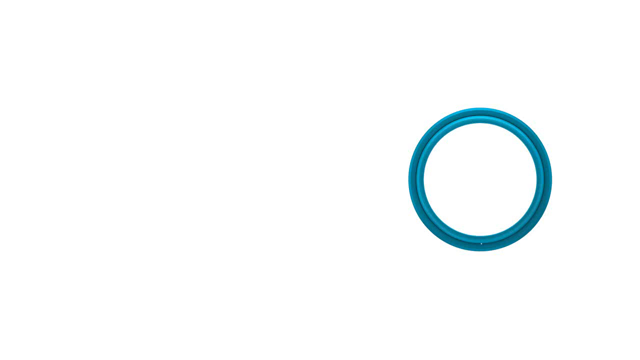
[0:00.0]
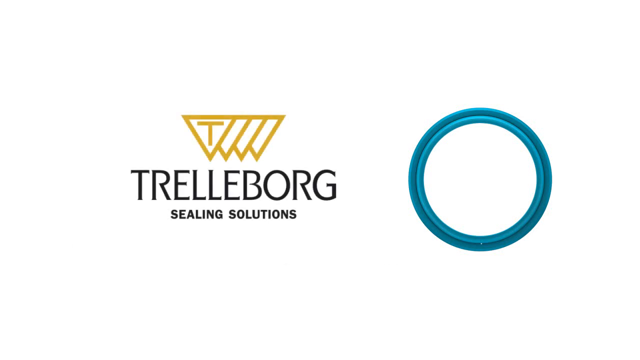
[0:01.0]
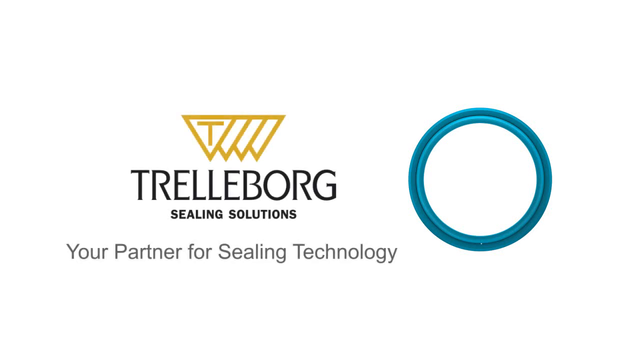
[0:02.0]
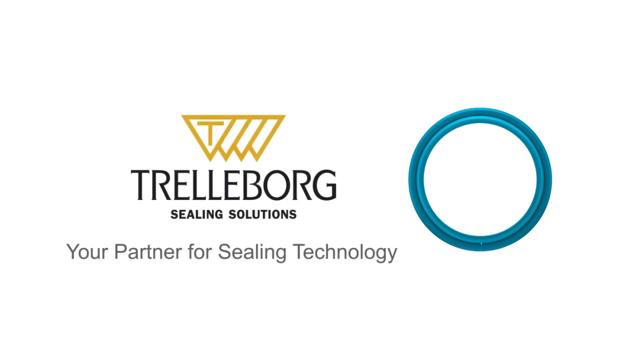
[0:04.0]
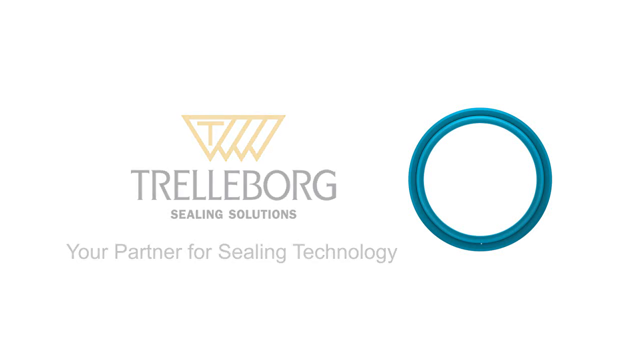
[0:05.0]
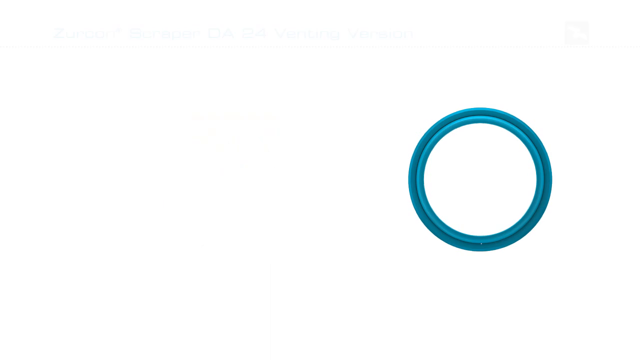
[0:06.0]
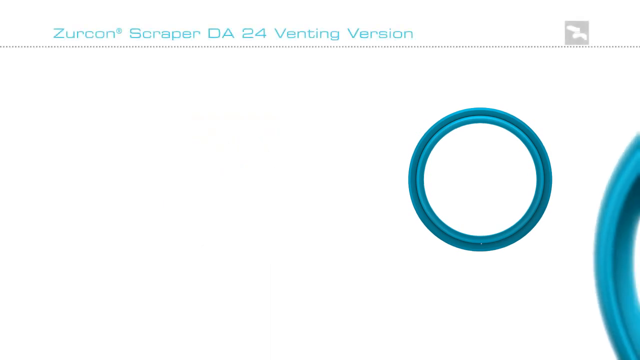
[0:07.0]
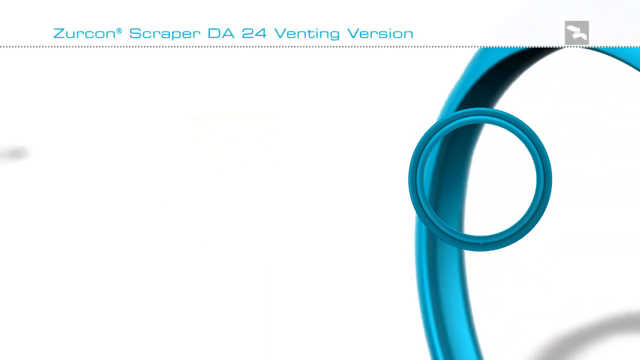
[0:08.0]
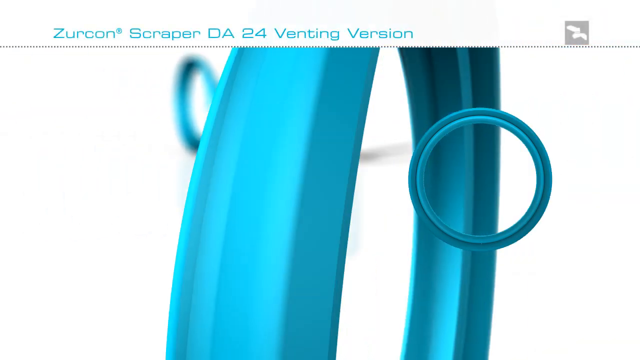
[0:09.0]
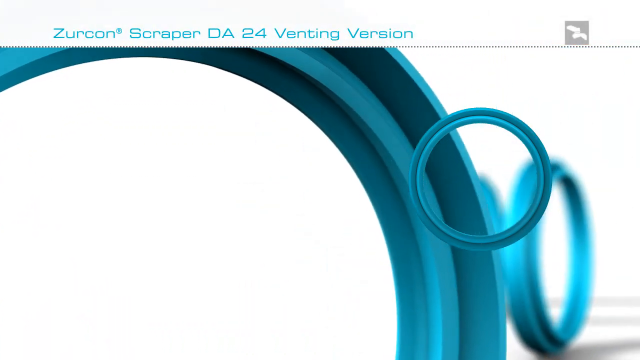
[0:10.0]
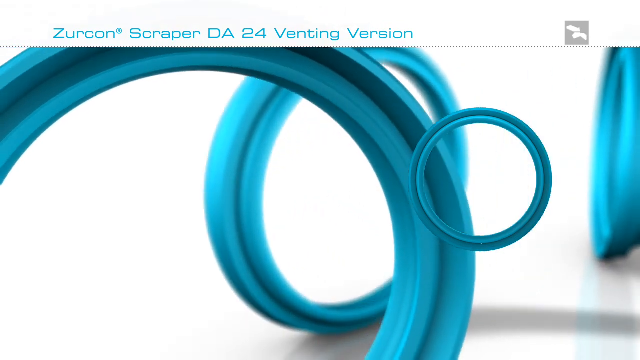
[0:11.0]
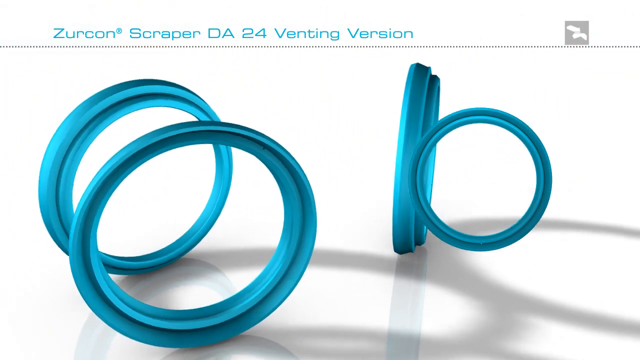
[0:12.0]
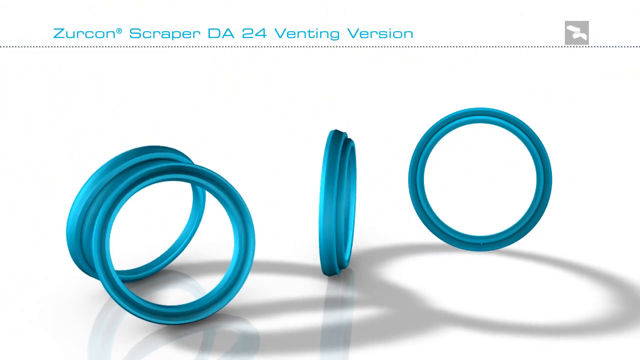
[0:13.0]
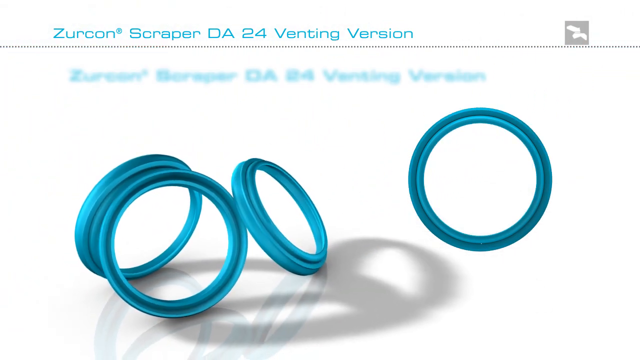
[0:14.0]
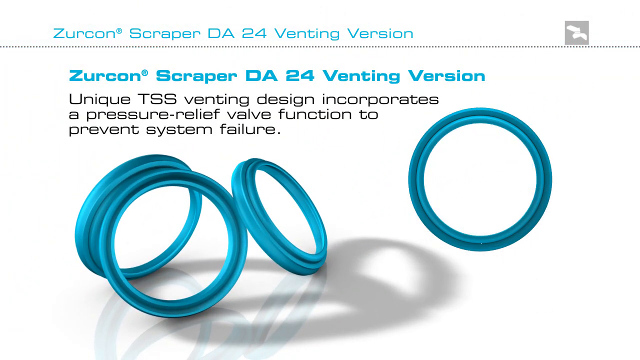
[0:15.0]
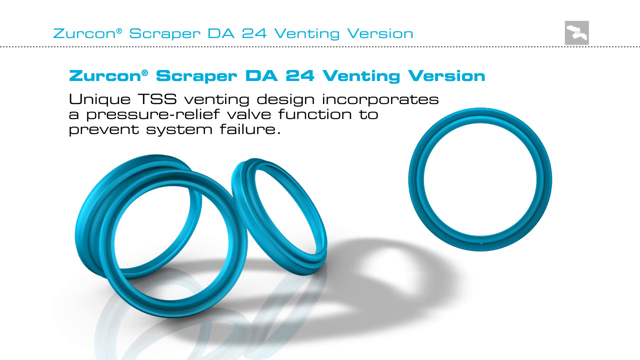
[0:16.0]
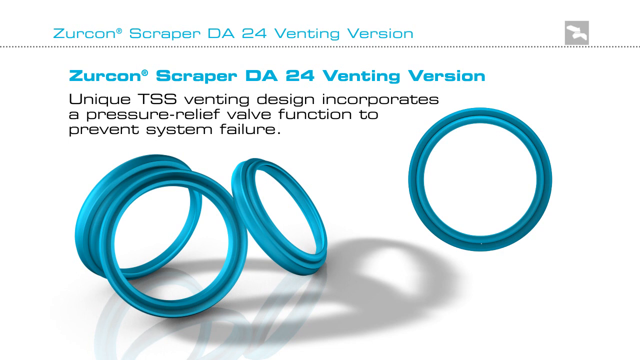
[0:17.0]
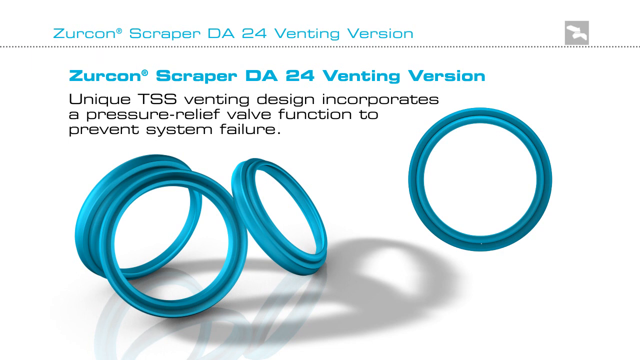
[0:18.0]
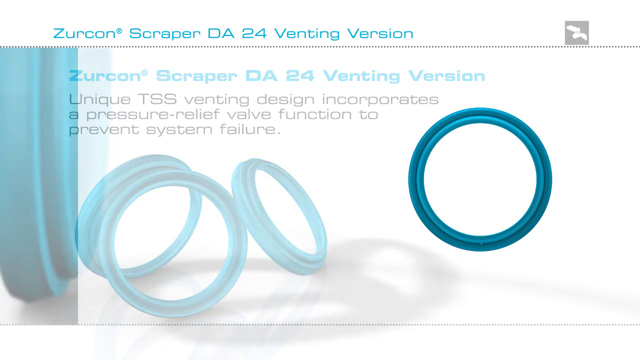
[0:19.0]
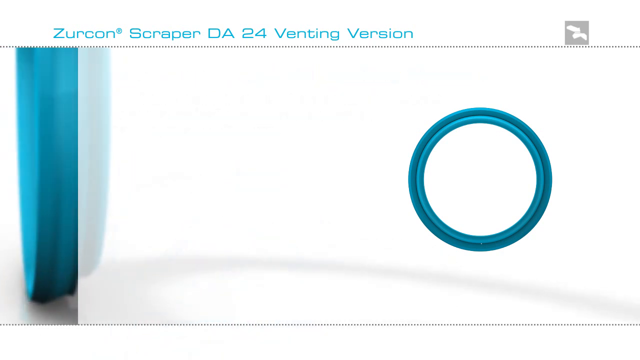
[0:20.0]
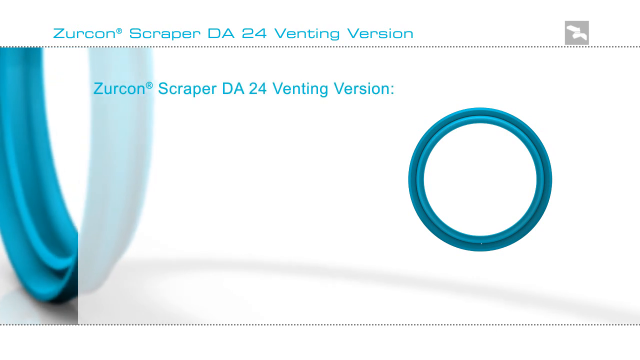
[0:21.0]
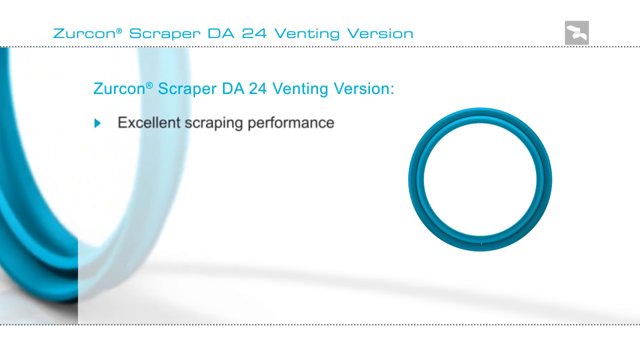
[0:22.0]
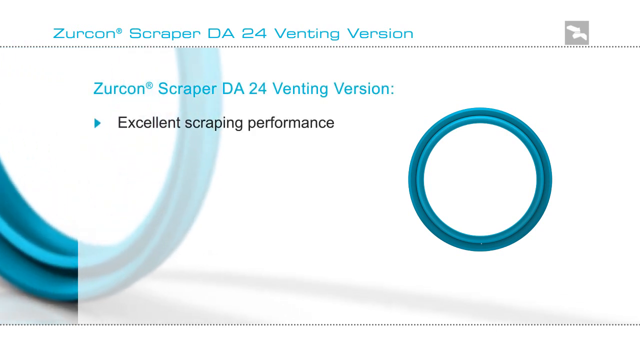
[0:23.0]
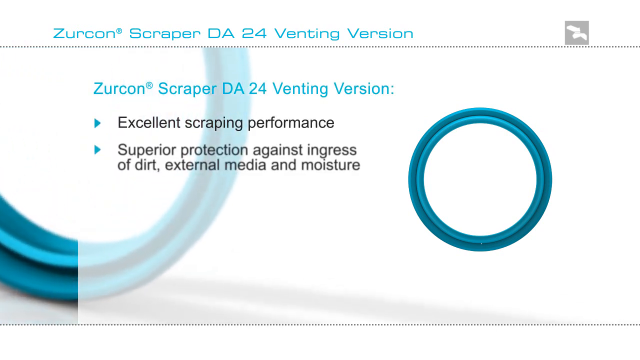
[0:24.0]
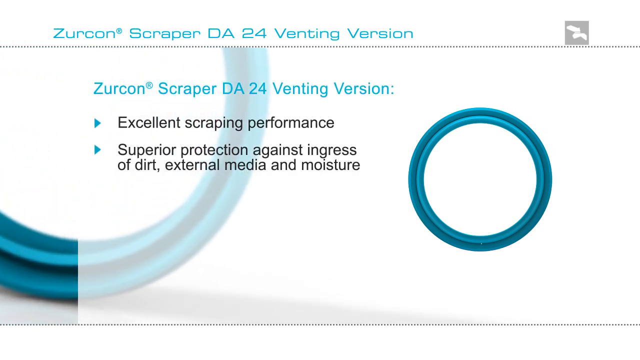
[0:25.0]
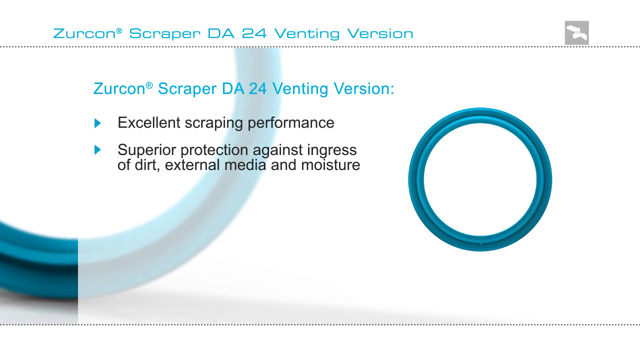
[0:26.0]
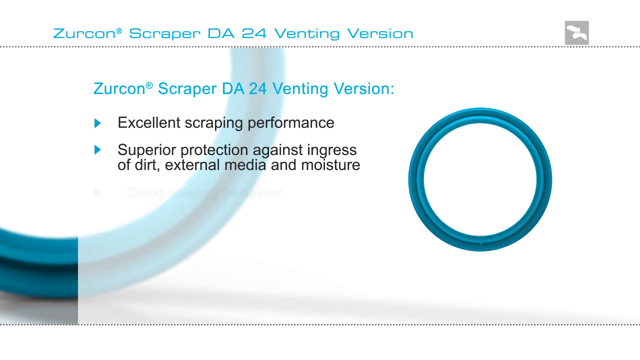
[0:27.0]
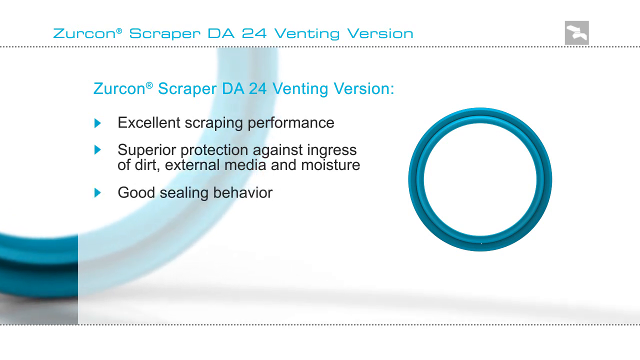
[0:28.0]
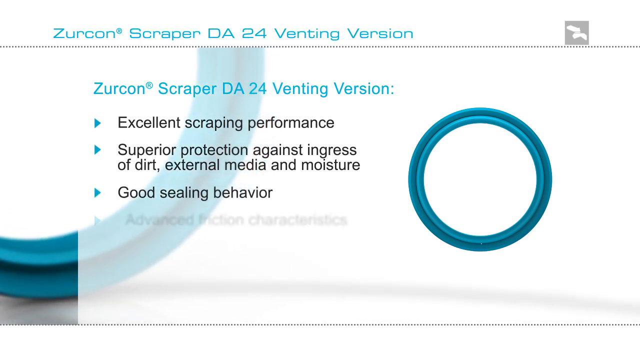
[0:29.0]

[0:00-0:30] A logo appears with four triangles that all seem to point down; the left triangle has a gold T in it. Underneath, black text reads "Trail Love Board Sealing Solutions", and text at the bottom reads "your partner for sealing technology". On the right there seems to be a turquoise circle, and the background is white. Everything then disappears except the blue circle, and light blue text at the top reads "Zircon Scraper DA24 venting version". A bigger turquoise circle comes in from the bottom on the right side of the screen and slowly moves toward the left, appearing to flip as it goes from the right side to the left side of the screen. Meanwhile two more turquoise circles come in in the background, and the three of them seem to end up resting against each other. Light blue text then comes out along with some black text.